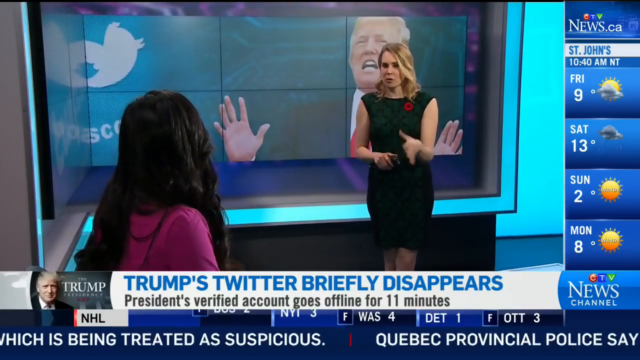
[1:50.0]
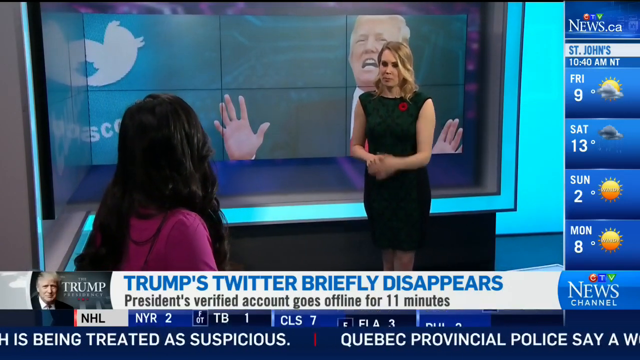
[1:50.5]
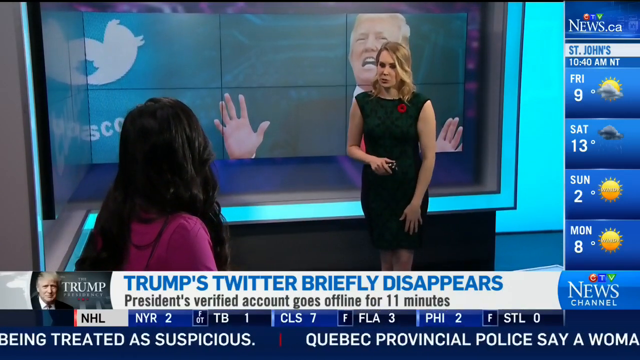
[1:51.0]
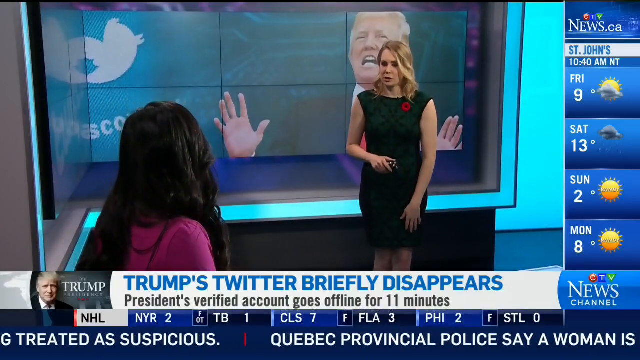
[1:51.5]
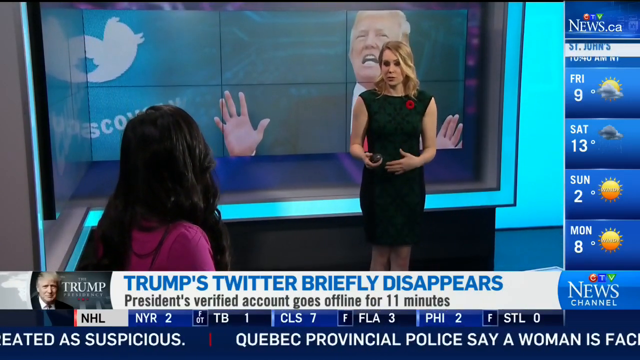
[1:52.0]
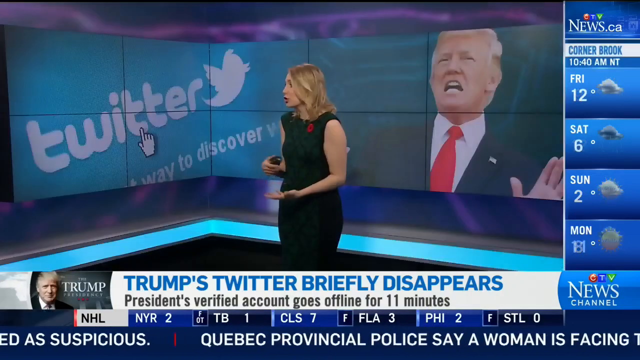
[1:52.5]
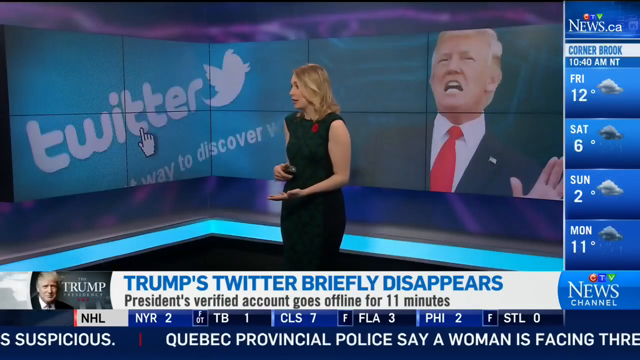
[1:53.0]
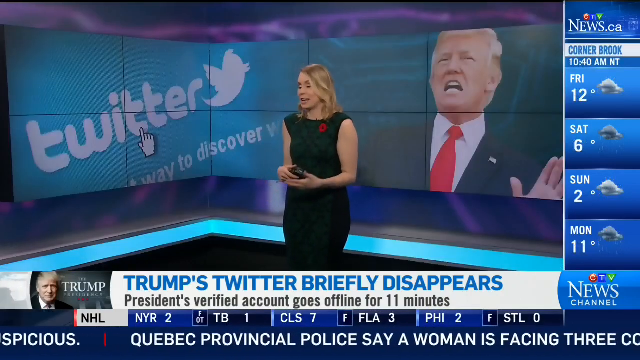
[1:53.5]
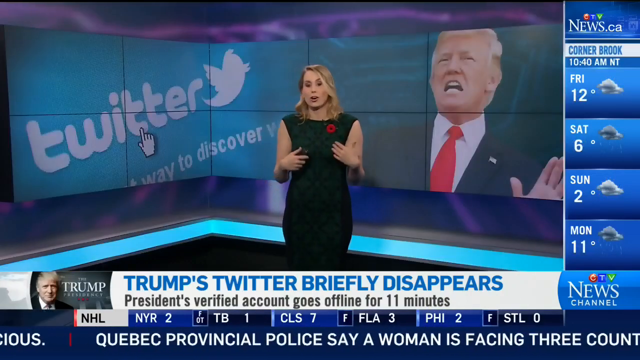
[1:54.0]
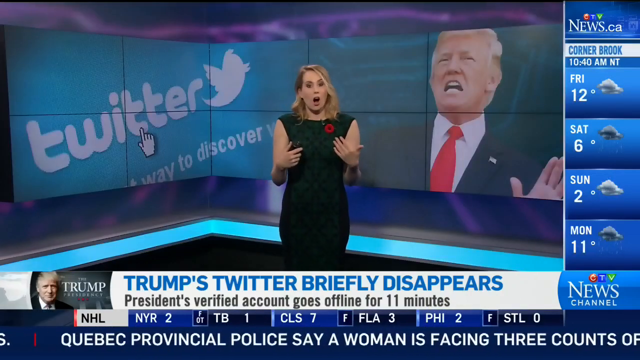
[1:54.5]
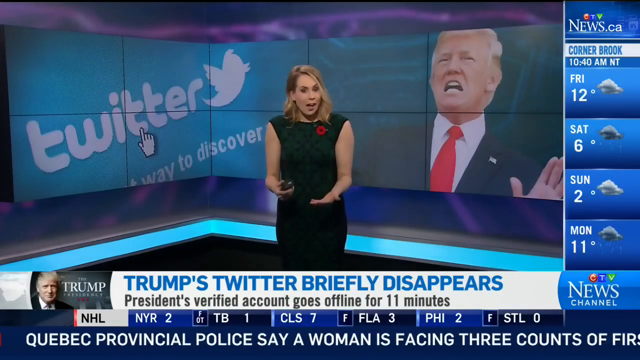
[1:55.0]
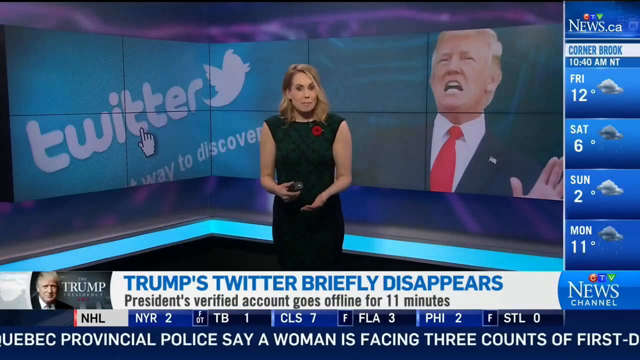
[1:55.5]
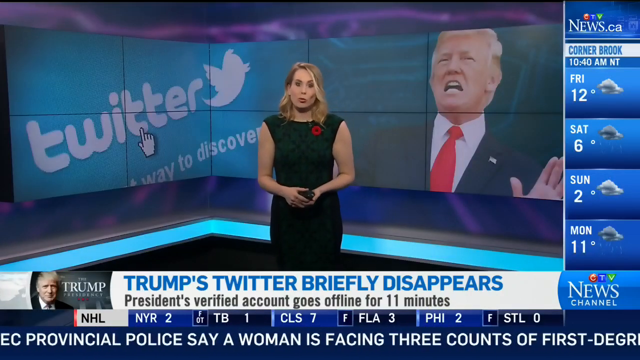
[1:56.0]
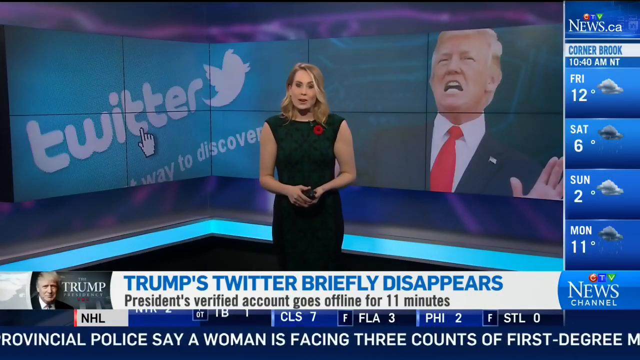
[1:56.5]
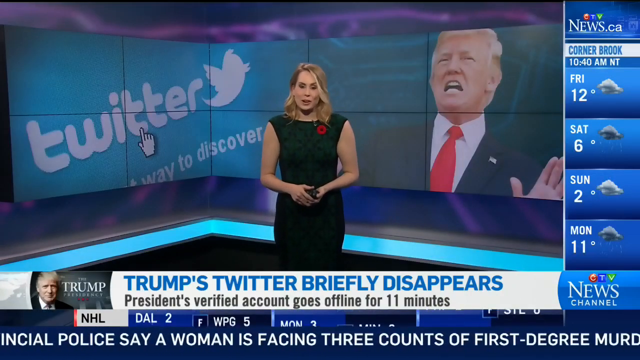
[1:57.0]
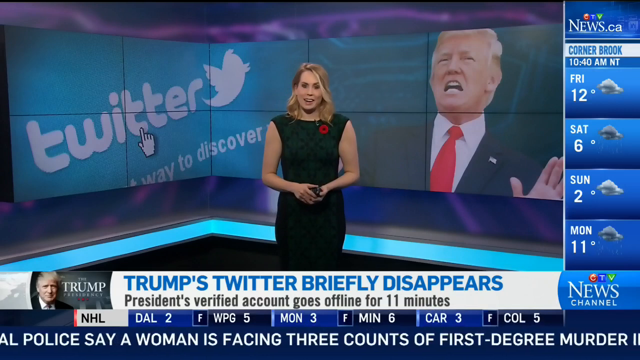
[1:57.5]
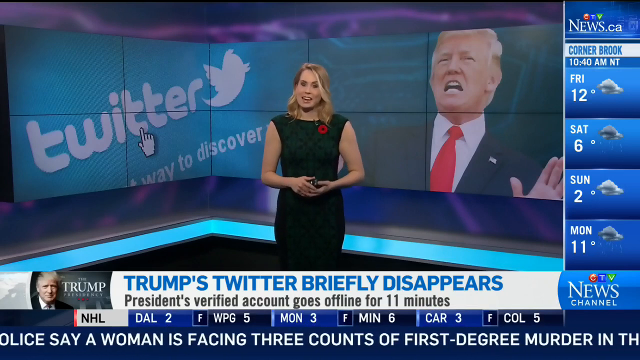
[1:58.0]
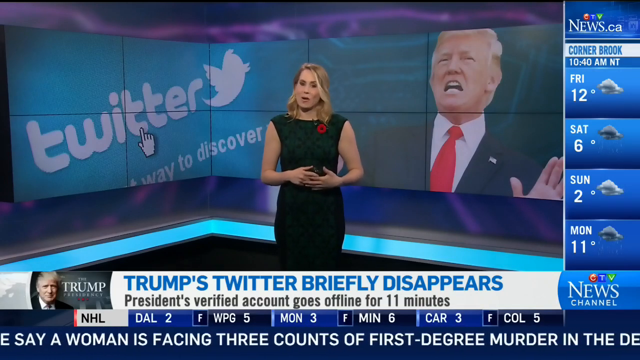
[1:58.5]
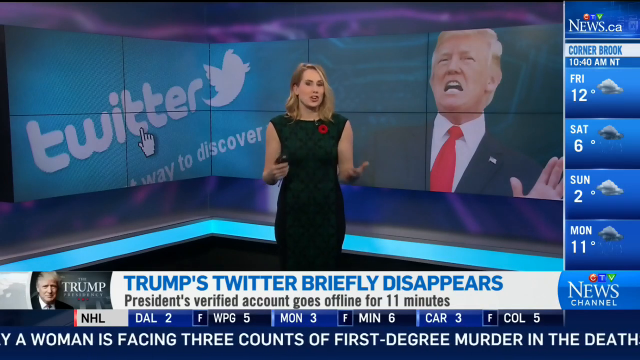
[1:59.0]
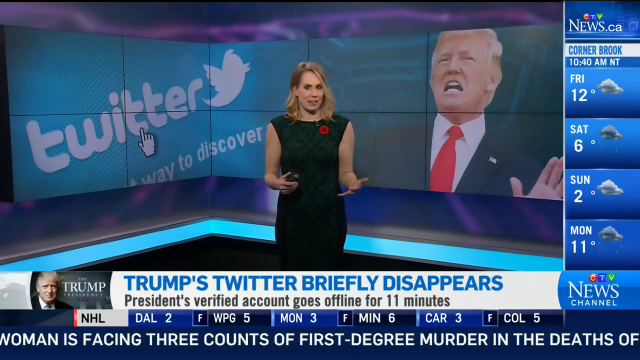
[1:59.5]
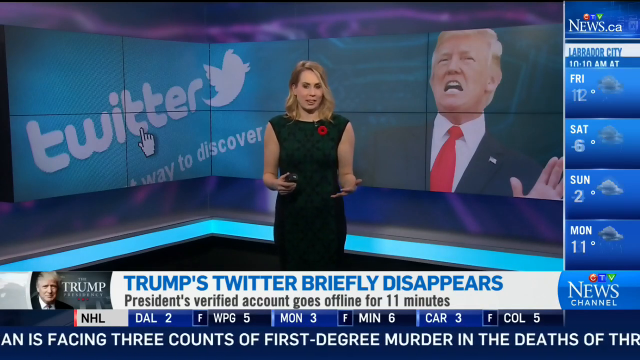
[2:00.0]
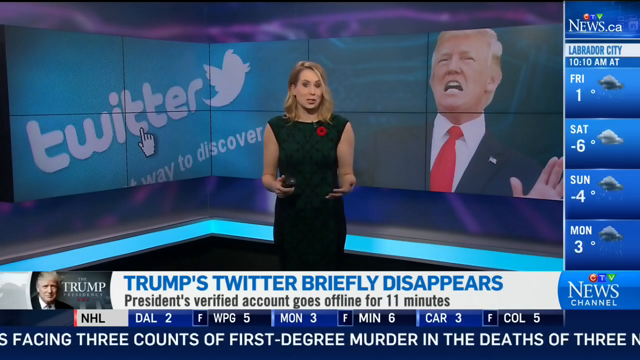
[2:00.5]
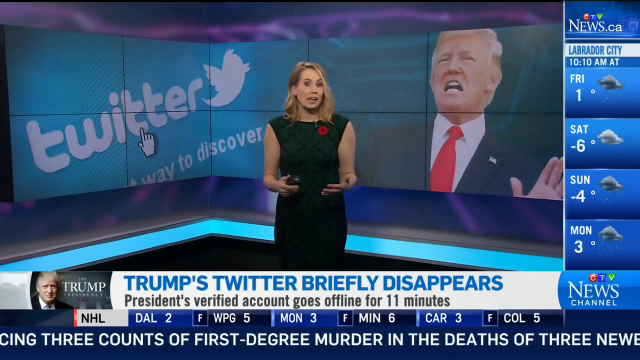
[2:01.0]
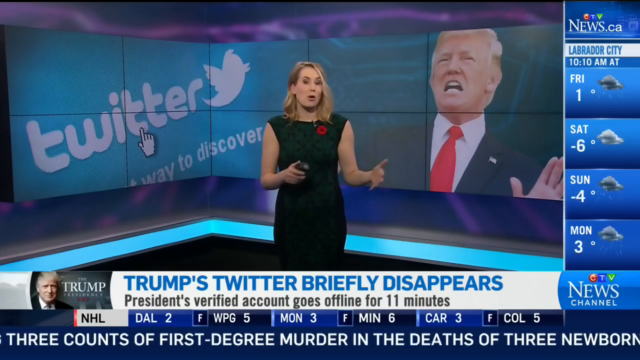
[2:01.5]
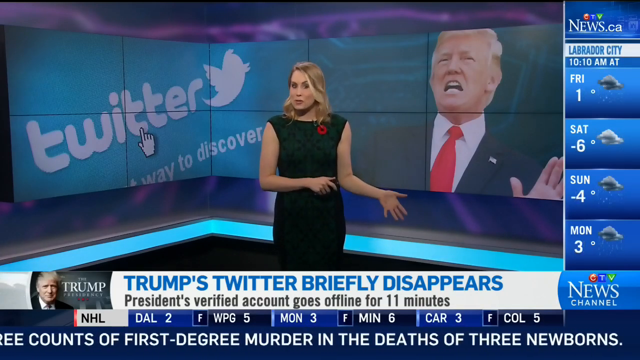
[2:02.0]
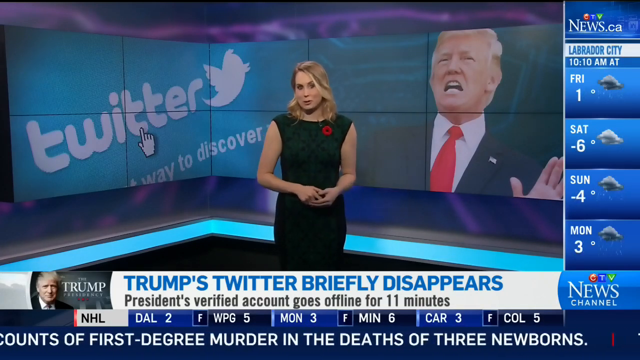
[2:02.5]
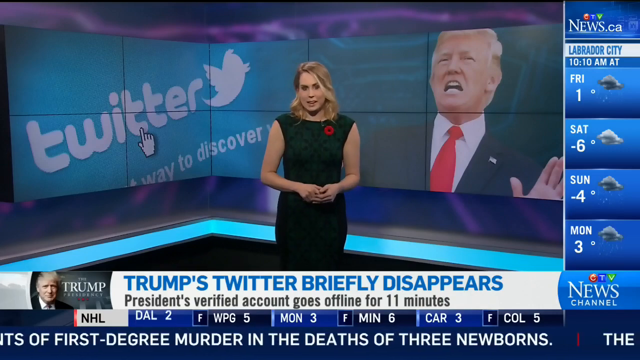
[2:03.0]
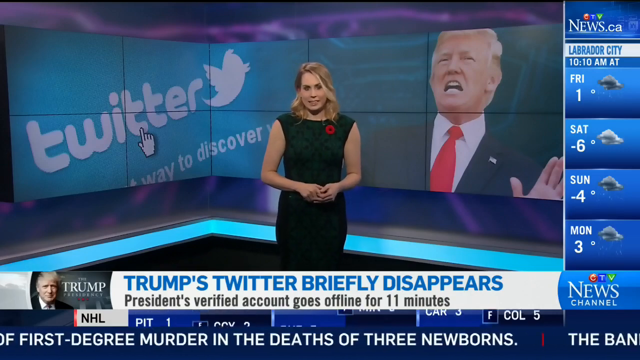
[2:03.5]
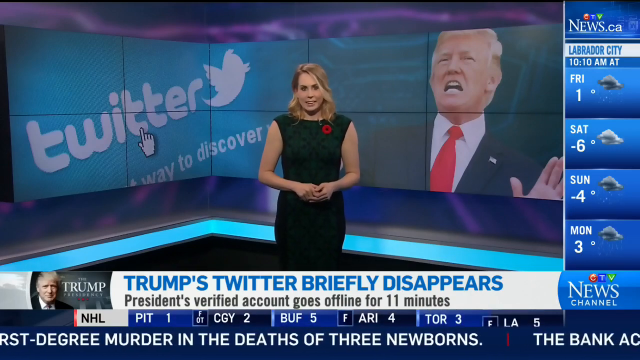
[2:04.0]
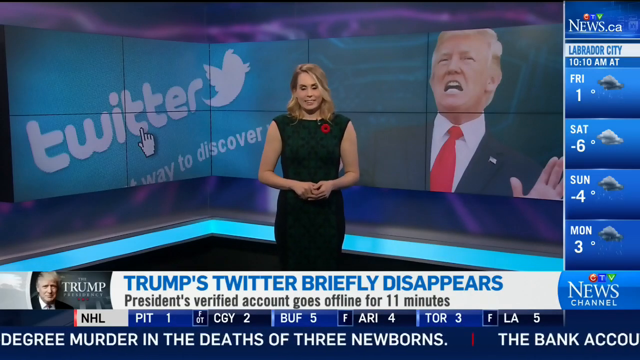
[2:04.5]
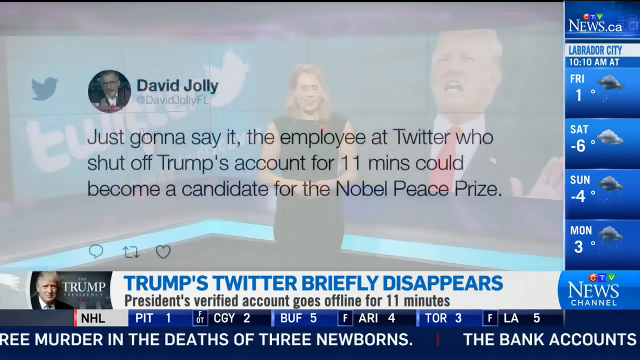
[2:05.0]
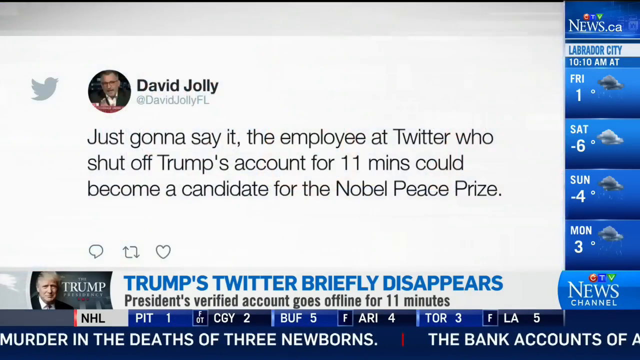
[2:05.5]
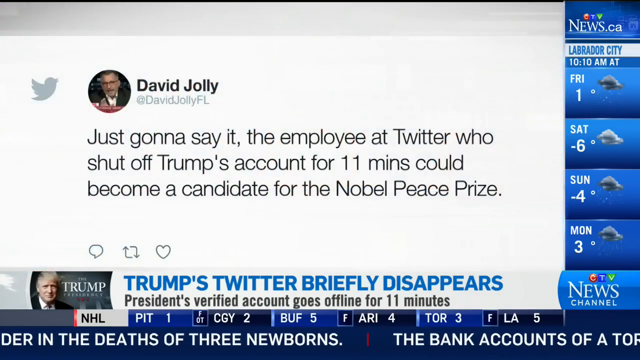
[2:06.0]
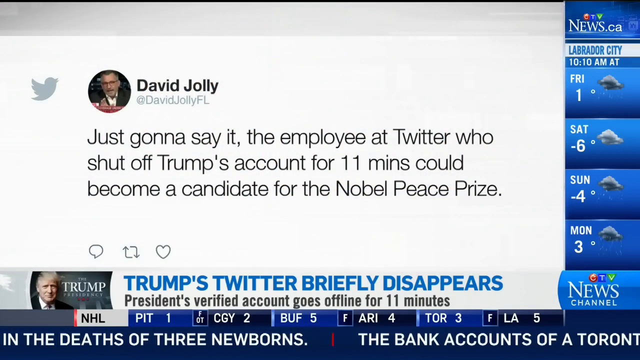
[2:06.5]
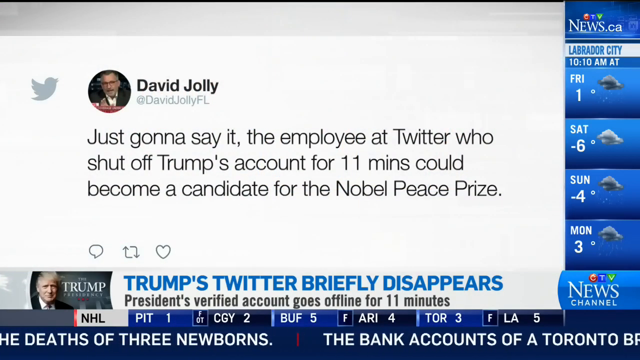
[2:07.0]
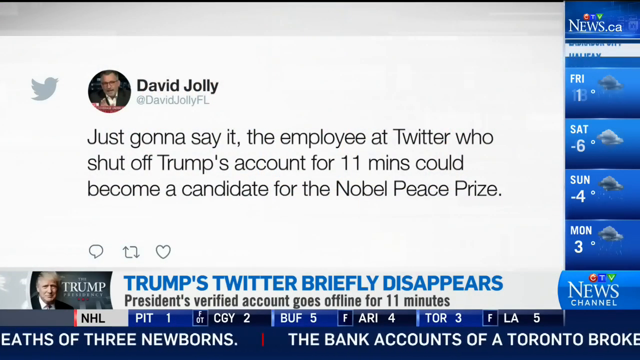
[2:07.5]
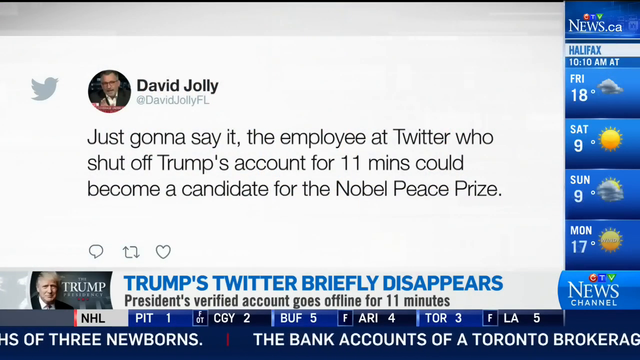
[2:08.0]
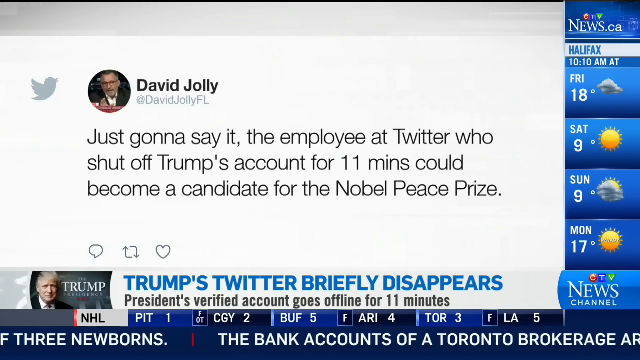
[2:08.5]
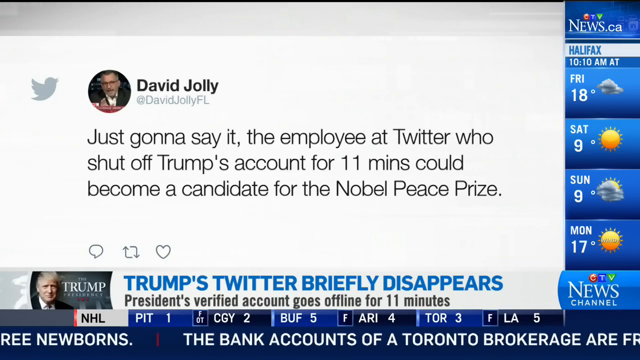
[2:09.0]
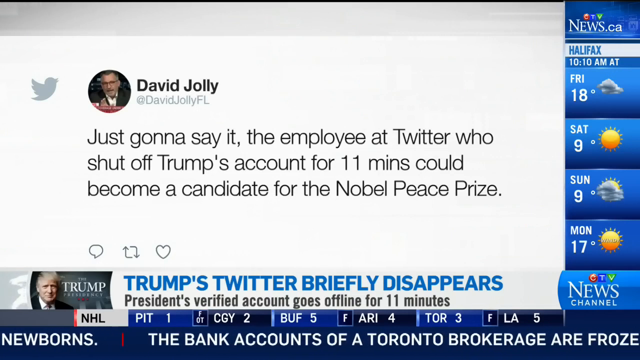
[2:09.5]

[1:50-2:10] The camera returns to the reporter with medium-length blonde hair, who speaks with a fairly neutral manner. She moves her hands a little to the side and seems to smile briefly toward the end of her shot. Her microphone is resting in her hands, and at one point she clasps both hands together with the microphone between them. Trump is still on the display screen with an odd expression: he looks as if he is in the middle of laughing, but it is almost an odd frown, with frown lines on his face and his mouth slightly agape, almost as if he were reacting to freezing cold. He wears a black suit, a red tie and a white shirt, and his hands seem to be up in the air. After the reporter, a tweet from David Jolly appears, with "David Jolly FL" underneath his name. It reads: "just gonna say it. The employee at Twitter who shut off Trump's account 11 minutes could become a candidate for the Nobel Peace Prize."